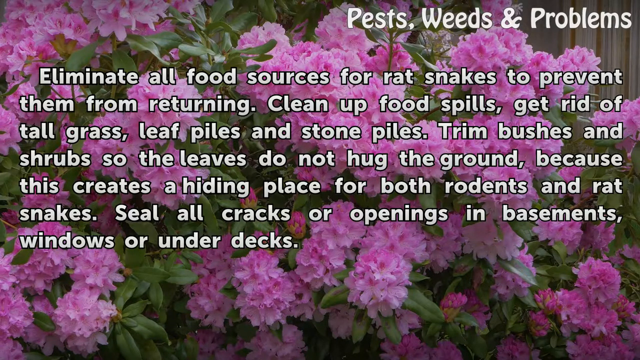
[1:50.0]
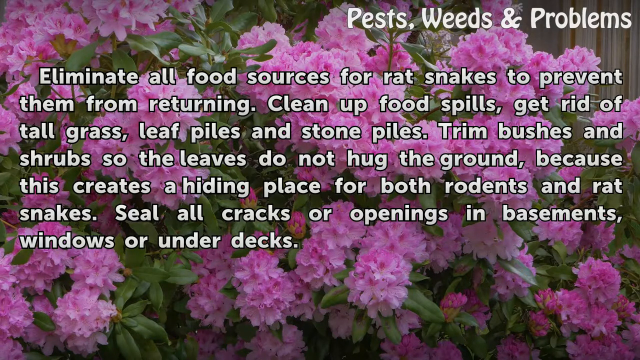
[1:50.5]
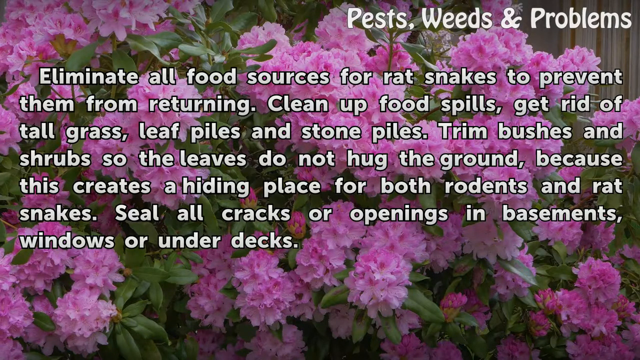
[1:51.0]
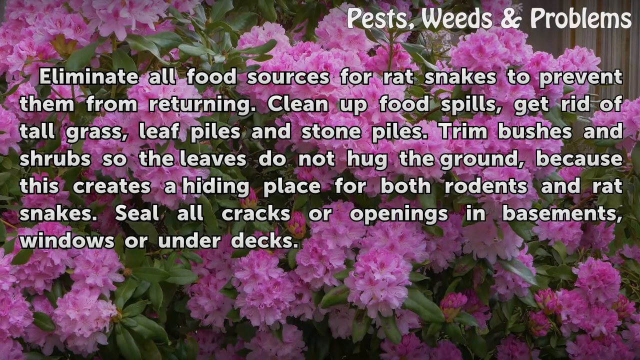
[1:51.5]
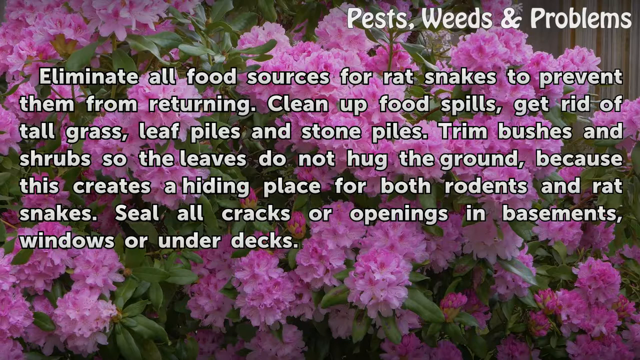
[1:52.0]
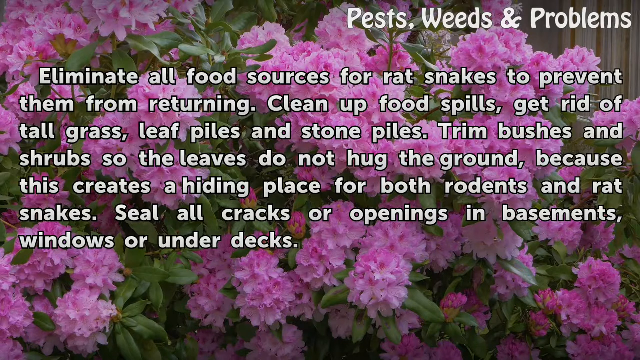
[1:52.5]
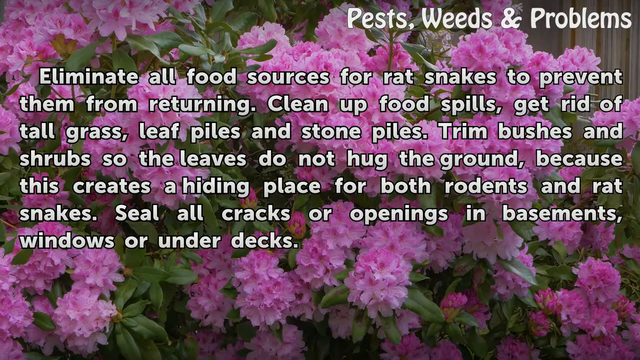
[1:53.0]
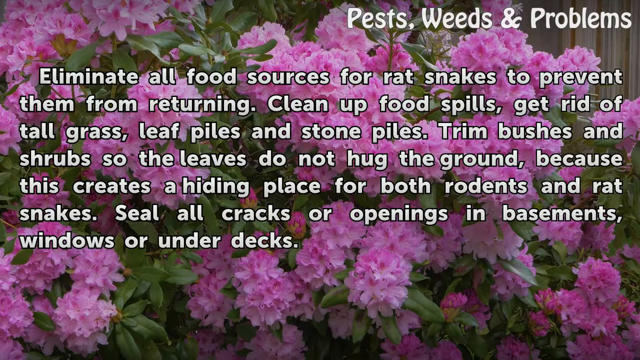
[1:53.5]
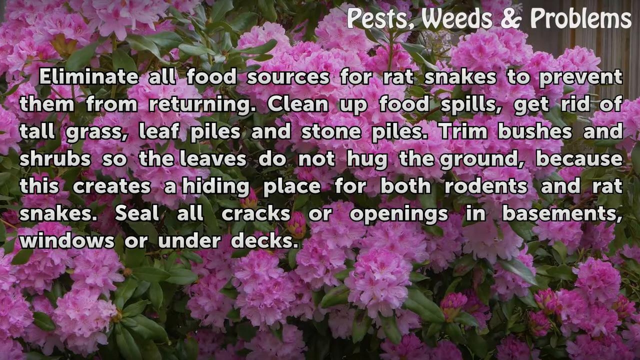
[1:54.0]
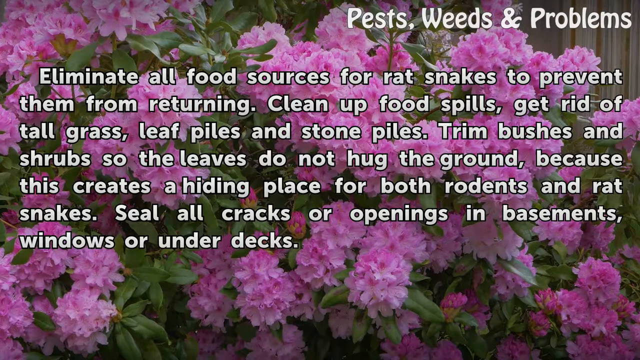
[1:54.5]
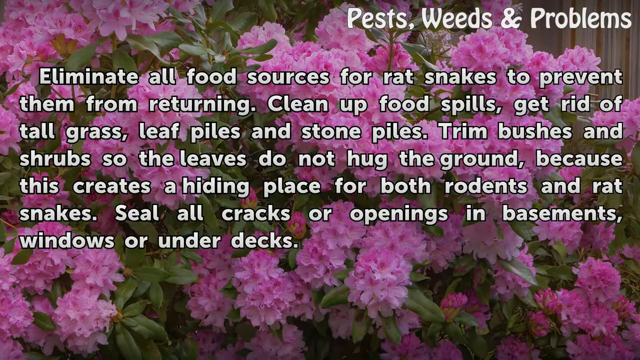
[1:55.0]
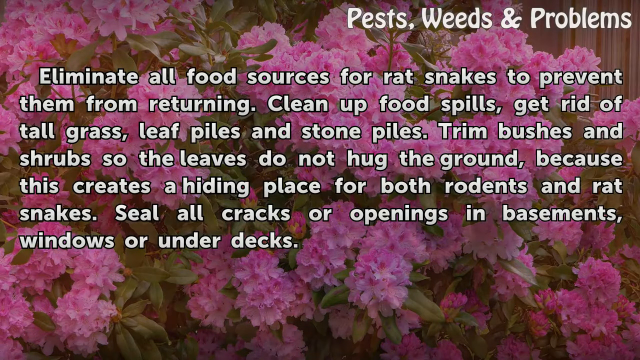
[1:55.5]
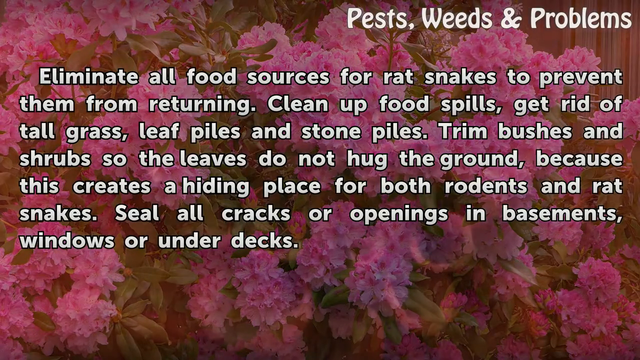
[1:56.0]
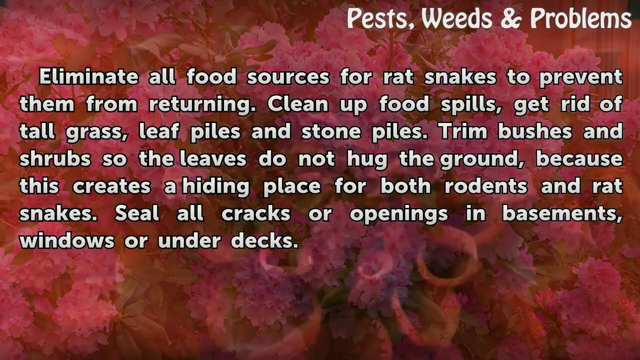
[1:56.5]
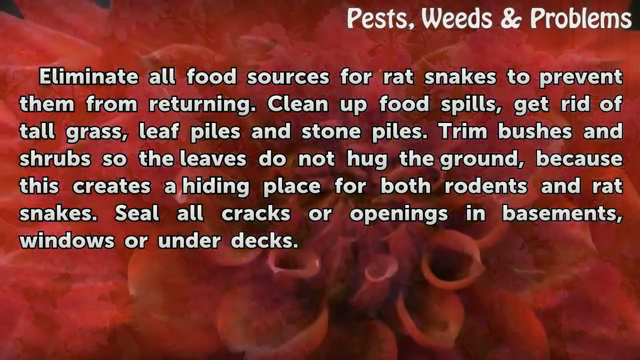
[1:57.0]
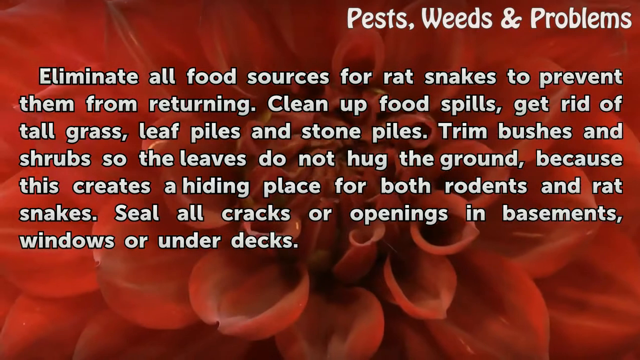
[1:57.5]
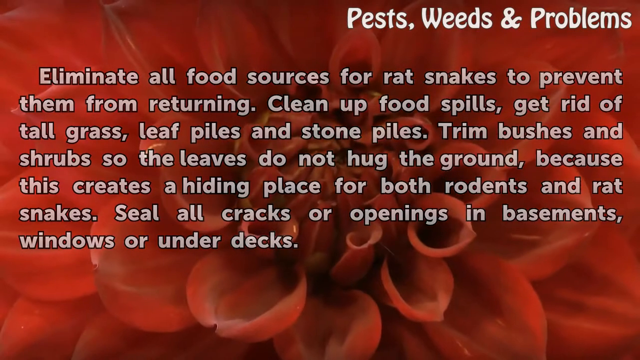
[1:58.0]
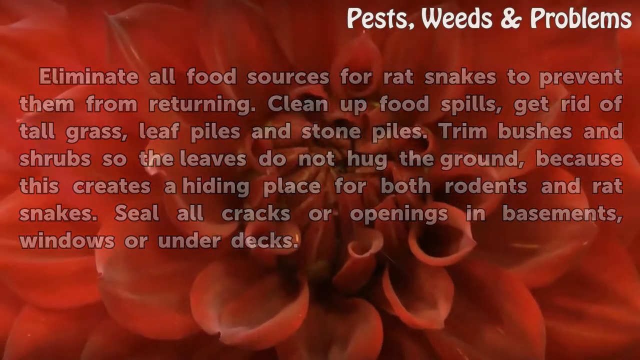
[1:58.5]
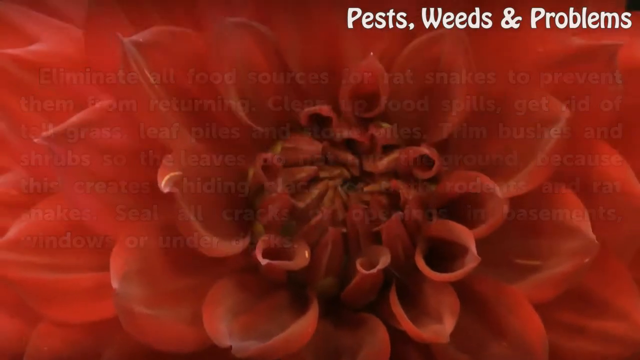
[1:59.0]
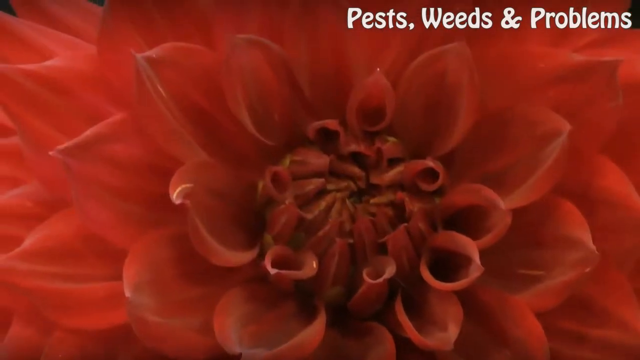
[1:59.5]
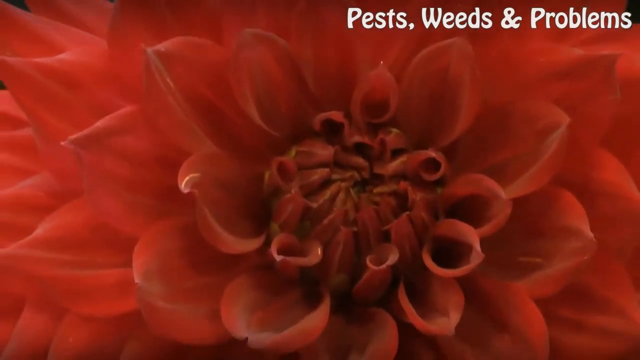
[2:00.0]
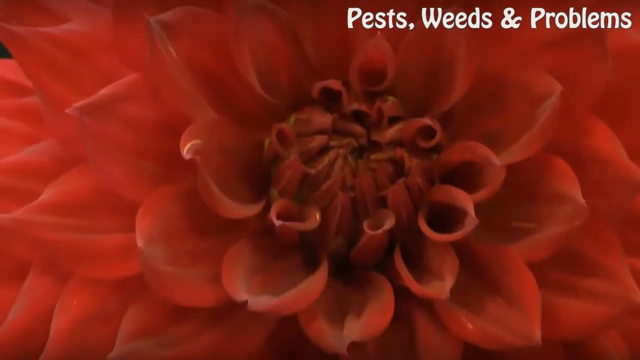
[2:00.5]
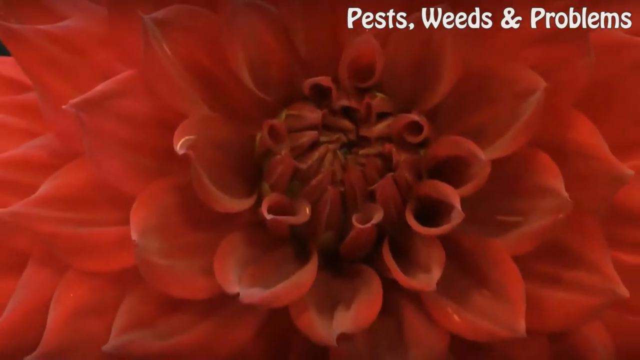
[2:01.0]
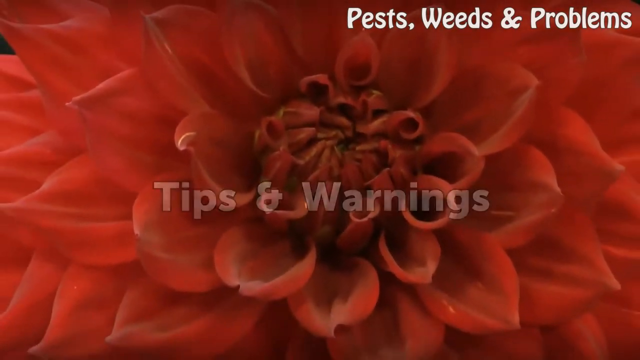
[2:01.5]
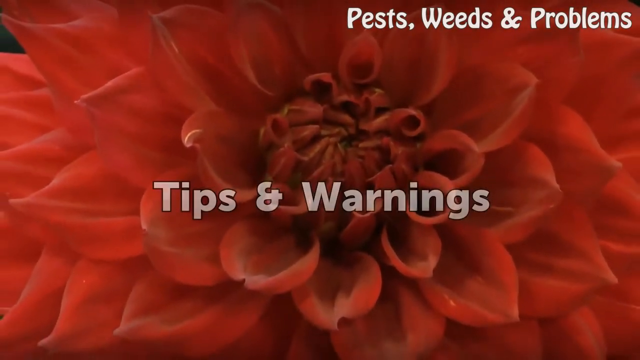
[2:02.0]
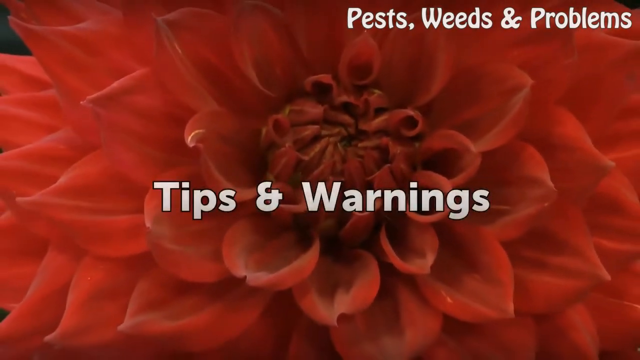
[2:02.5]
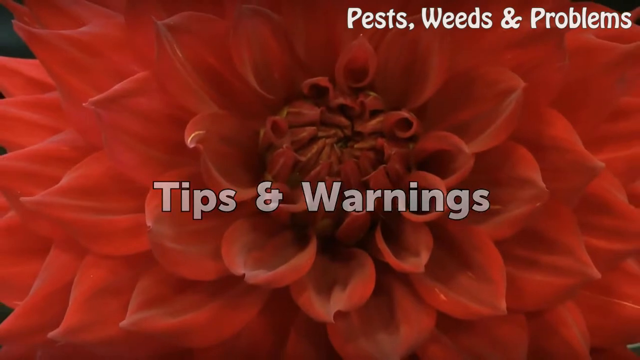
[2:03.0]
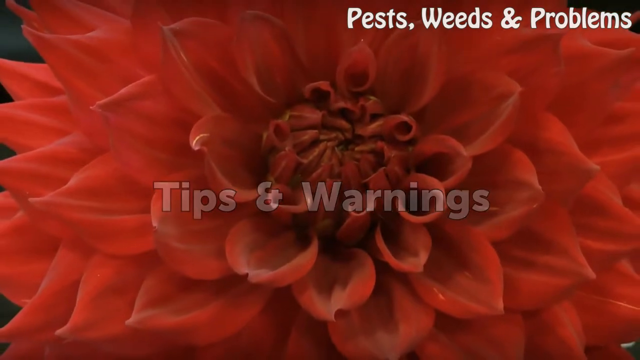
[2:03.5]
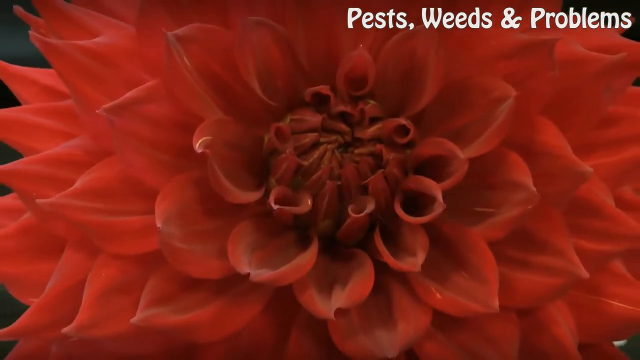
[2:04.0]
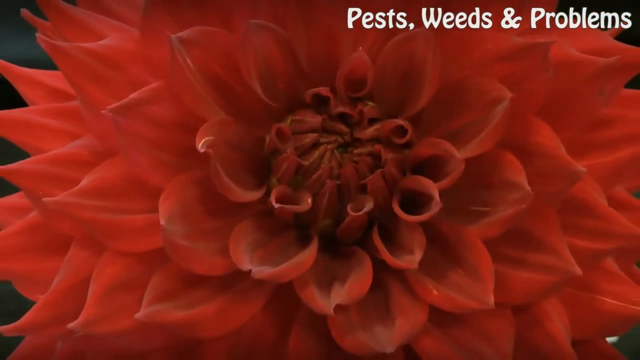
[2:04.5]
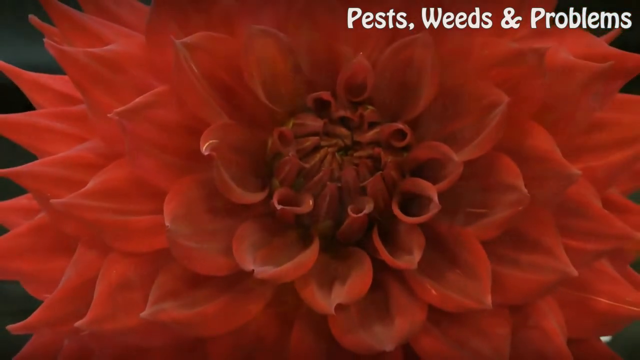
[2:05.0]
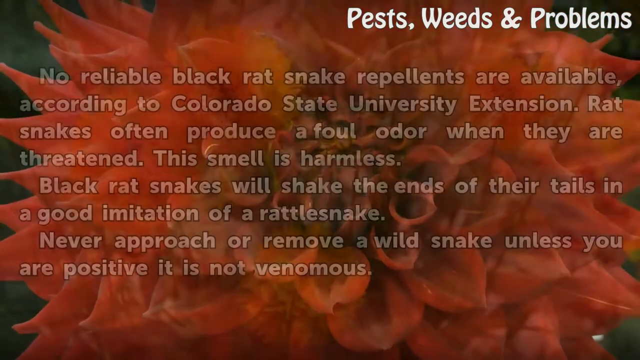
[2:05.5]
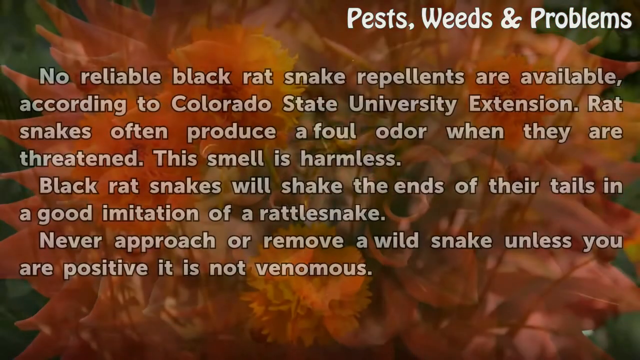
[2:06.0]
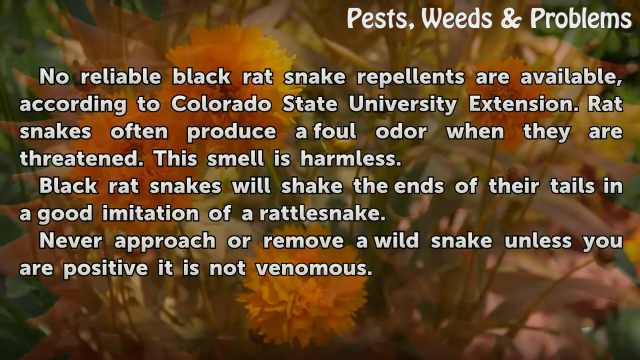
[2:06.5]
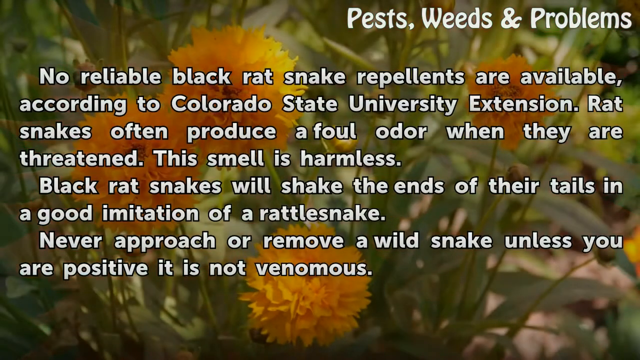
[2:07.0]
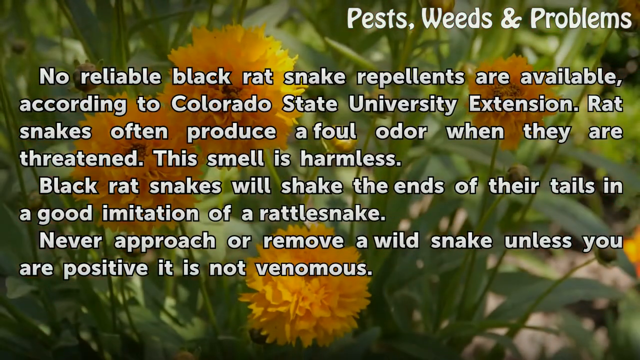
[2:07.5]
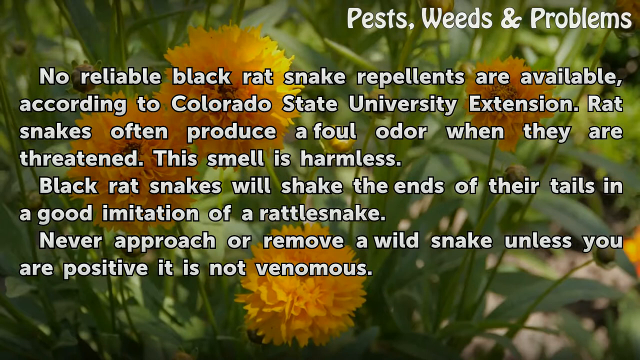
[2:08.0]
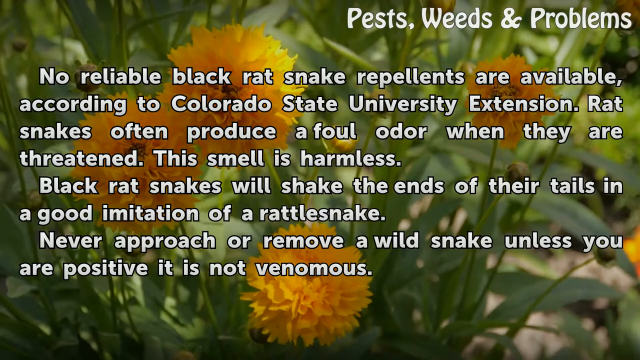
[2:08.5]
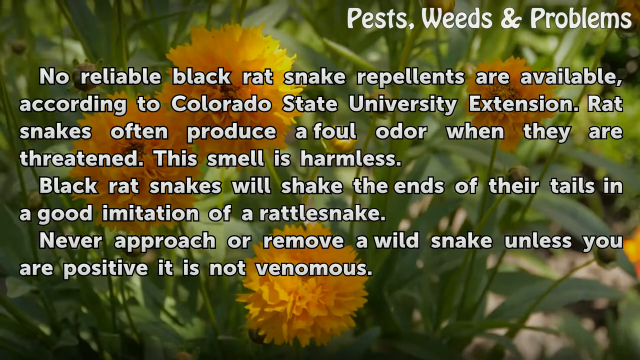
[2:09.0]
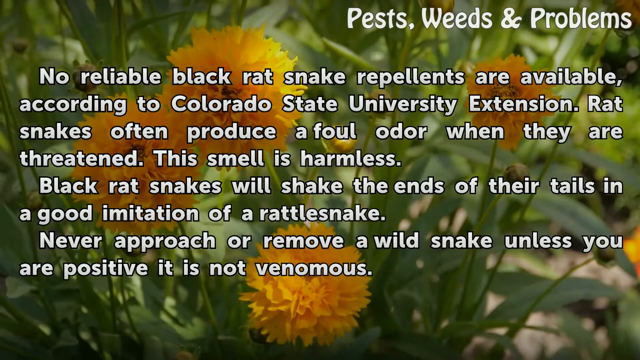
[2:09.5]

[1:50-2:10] White lettering at the top right says "pest weeds and problems." Text running down the center says "eliminate all food sources for rat snakes to prevent them from returning. Clean up food spills, get rid of tall grass, leaf piles, and stone piles. Trim bushes and shrubs so the leaves do not hug the ground because this creates a hiding place for both rodent and rat snakes. Seal all cracks or openings in basements, windows, or under decks." The background shows green leaves, green stems and light and dark pink flowers spread around. The background then changes to a close-up of a reddish-orange petaled flower; white lettering in the center reads "TIPS AND WARNINGS," and the top right also says "PEST, WEEDS, & PROBLEMS." The background changes again to green leaves, green stems and about four yellow-petaled flowers with a little black in the center. White lettering running downward in the middle says "no reliable black rat snake repellents are available according to Colorado State University extension. Rat snakes often produce a foul odor when they are threatened. This smell is harmless. Black rat snakes will shake the ends of their tails in a good imitation of a rattlesnake. Never approach or remove a wild snake unless you are positive it is not venomous."